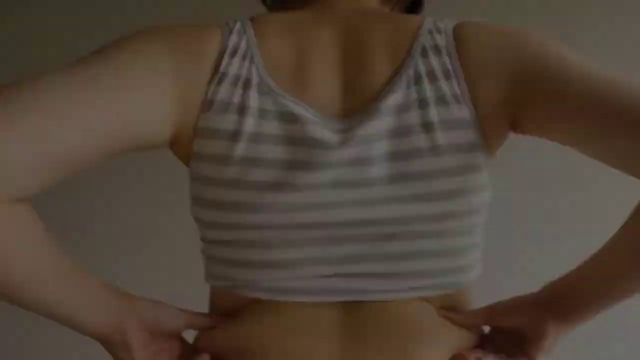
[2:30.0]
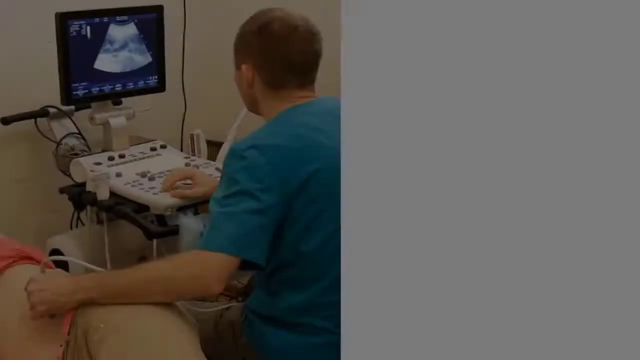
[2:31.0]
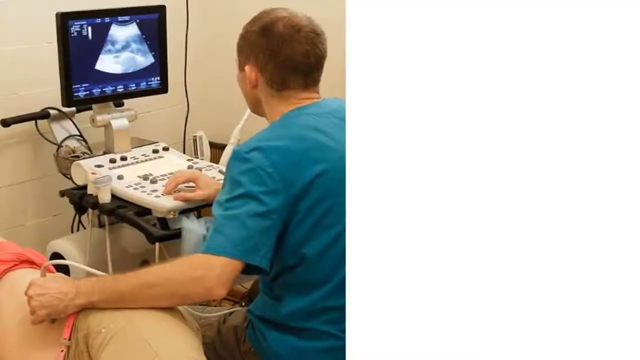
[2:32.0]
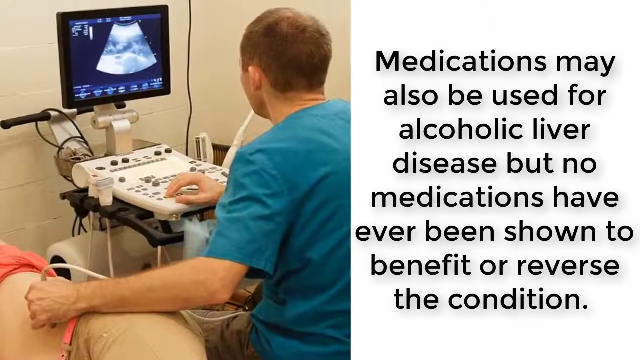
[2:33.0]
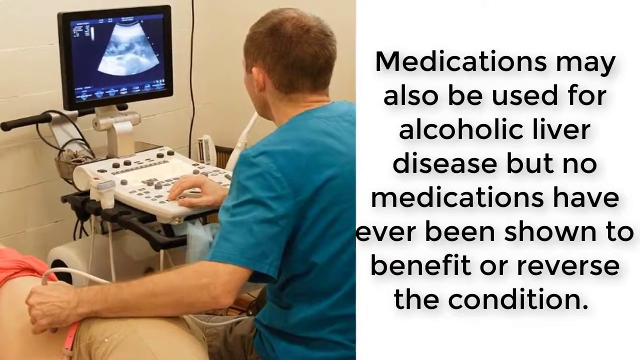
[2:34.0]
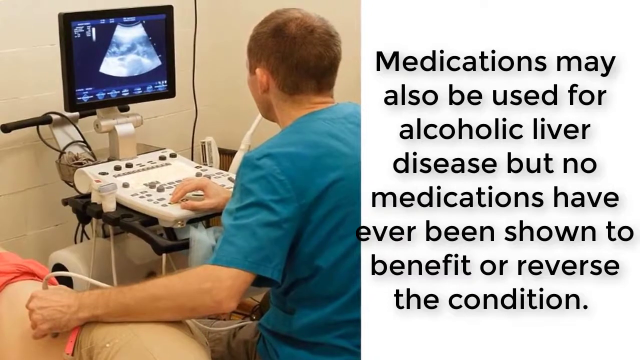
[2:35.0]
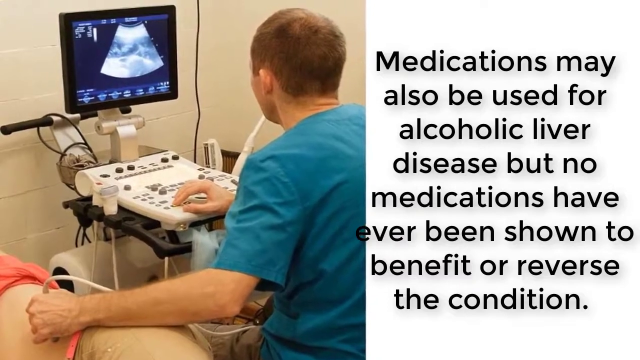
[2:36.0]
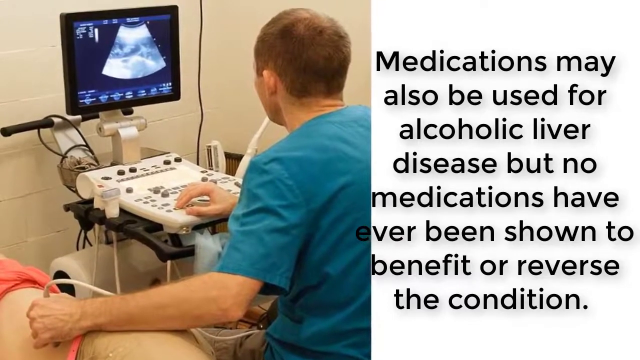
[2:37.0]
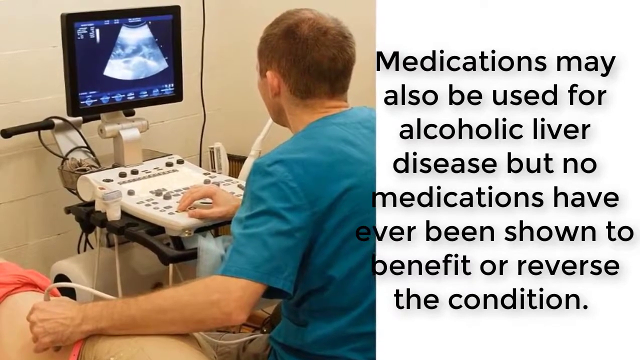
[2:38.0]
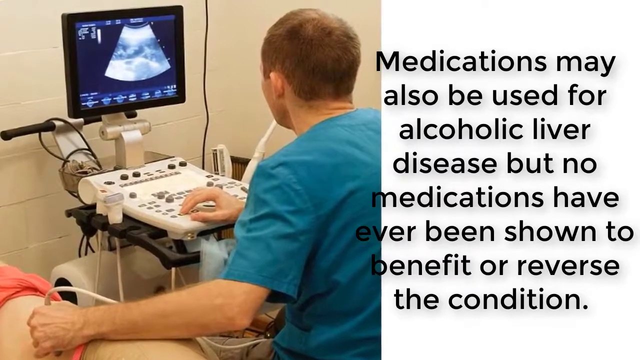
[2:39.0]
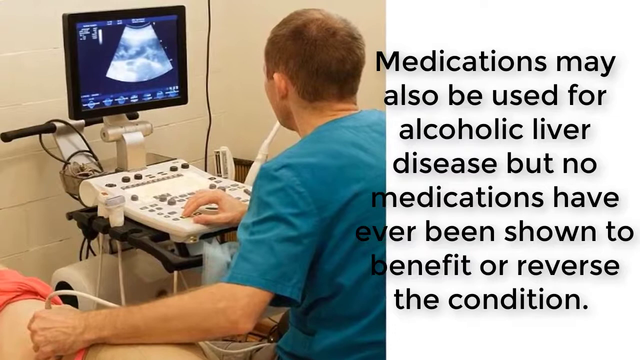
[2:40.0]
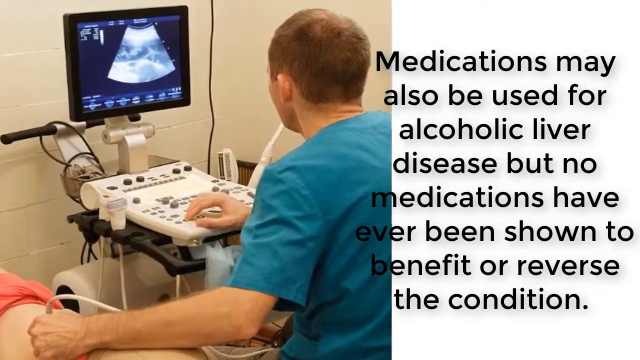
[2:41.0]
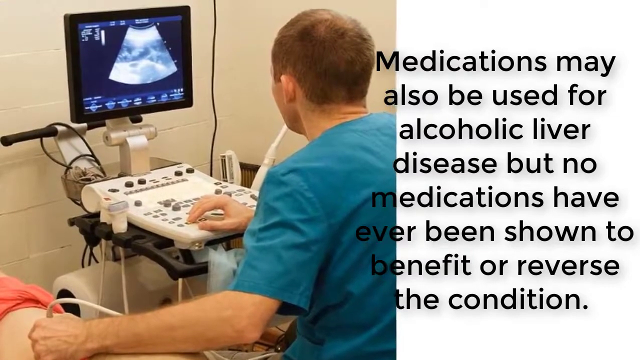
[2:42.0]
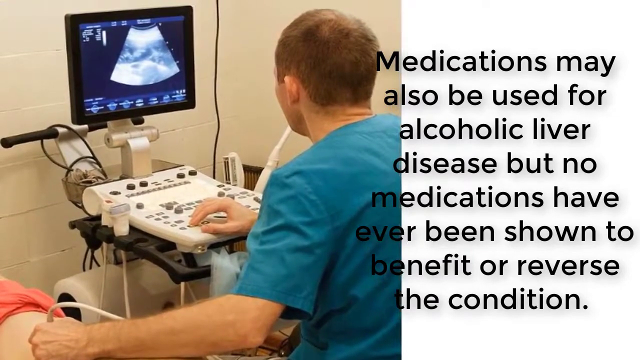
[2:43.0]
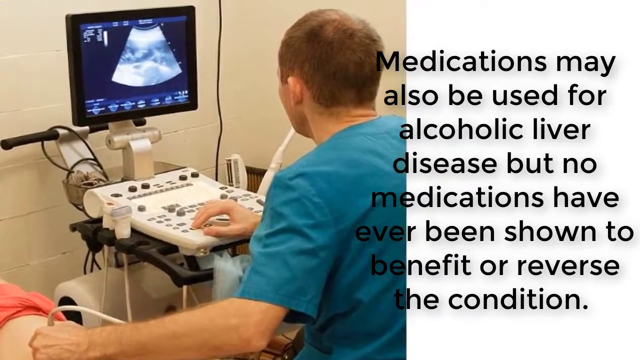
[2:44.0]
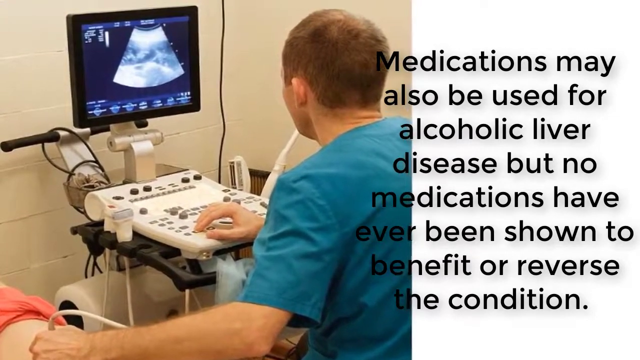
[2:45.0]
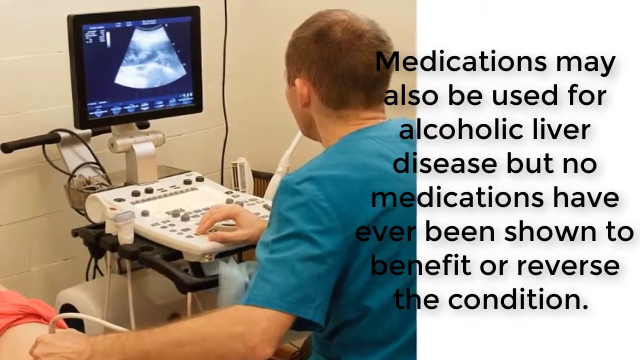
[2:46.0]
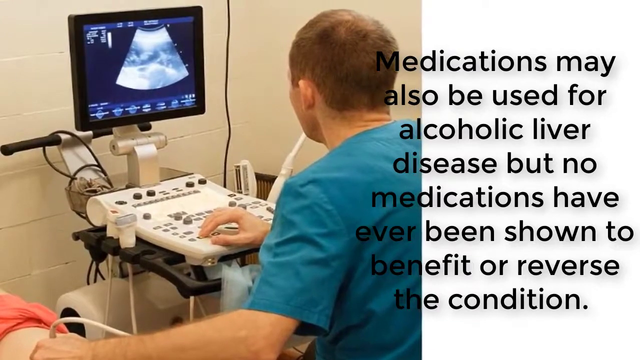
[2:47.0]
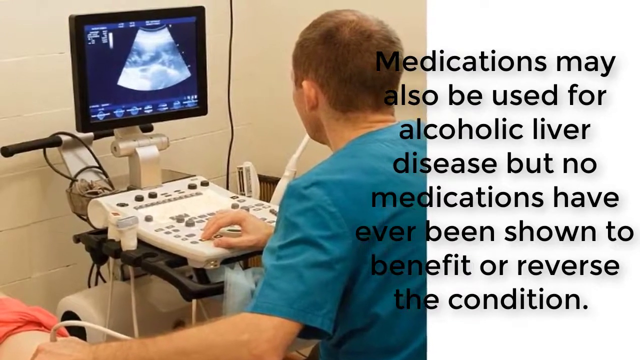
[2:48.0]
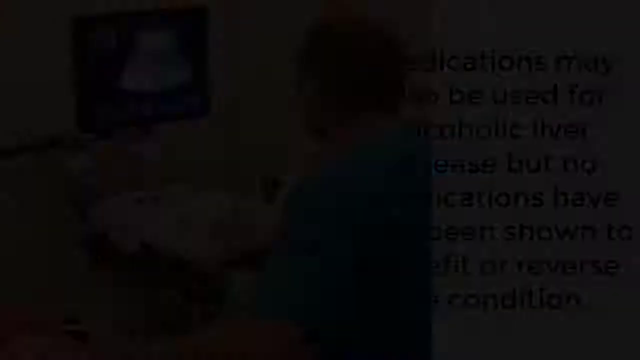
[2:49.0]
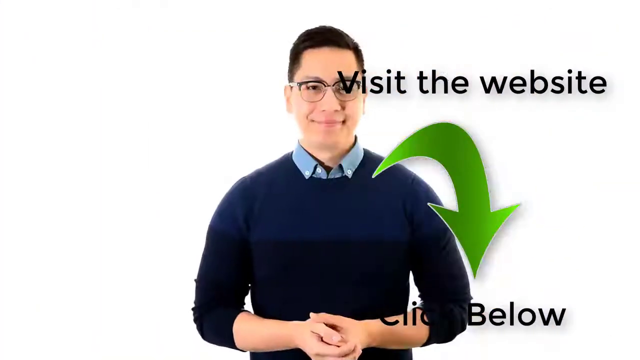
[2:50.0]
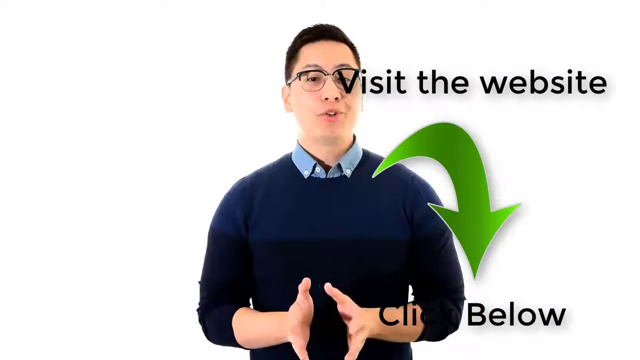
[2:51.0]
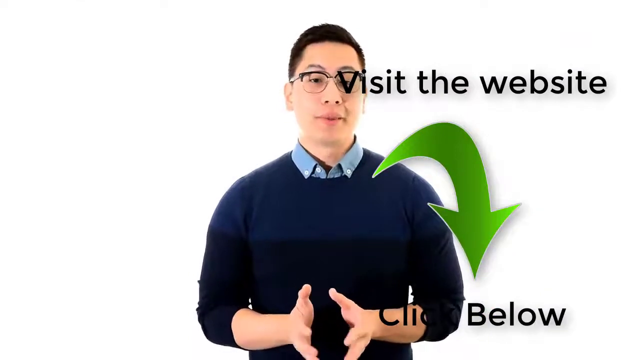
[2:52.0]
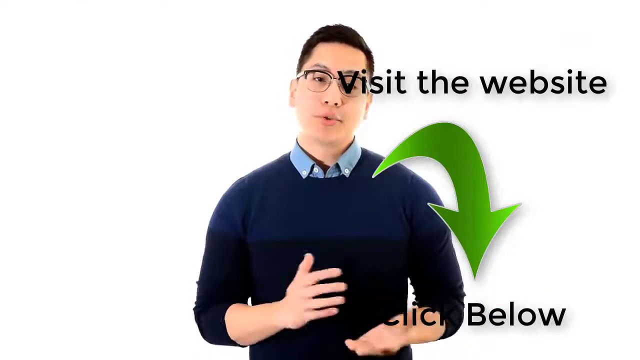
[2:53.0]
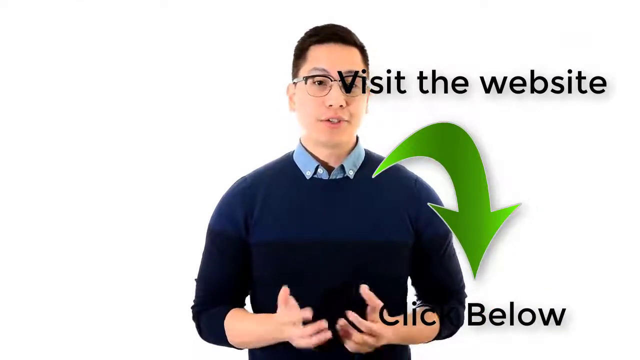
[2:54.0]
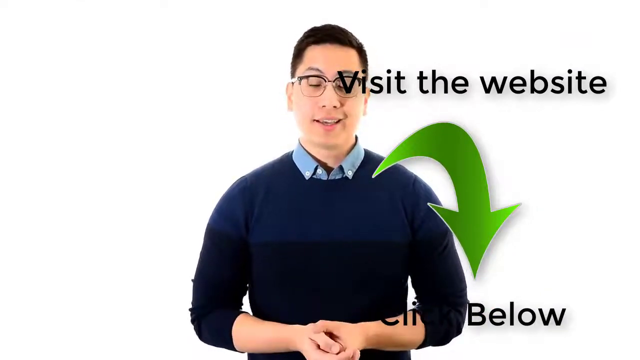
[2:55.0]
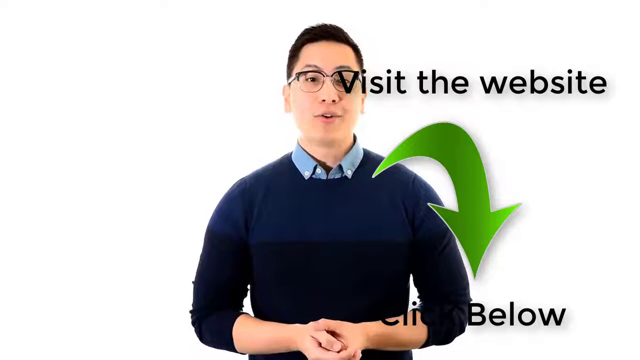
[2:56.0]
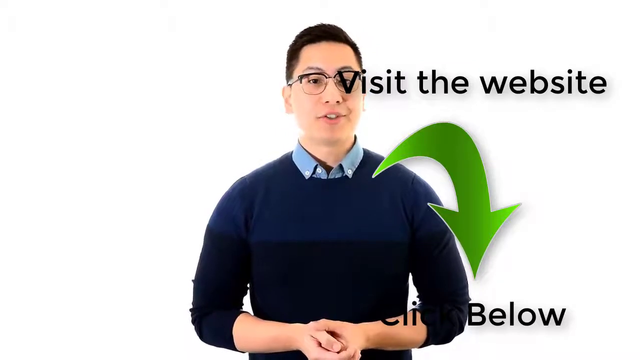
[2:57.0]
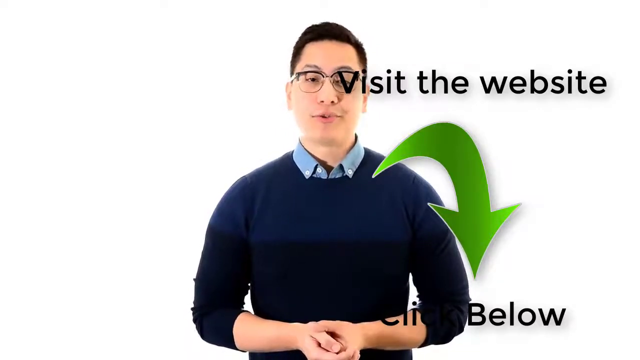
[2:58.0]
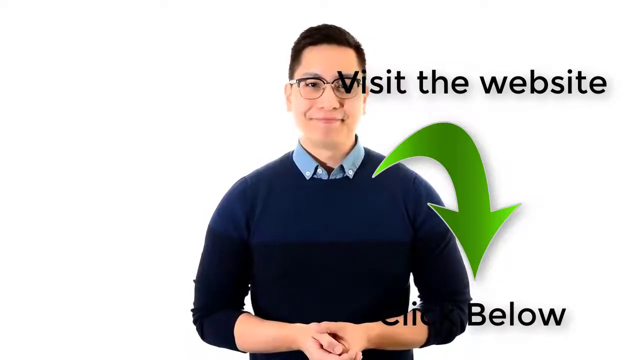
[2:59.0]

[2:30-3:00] On the left side of the screen, a person performs an ultrasound on a patient, typing with their right hand and holding the ultrasound device on the patient with their left hand. Little of the patient is visible other than their lifted shirt. The worker looks at a computer screen showing what is being scanned. On the right side, text reads "Medications may also be used for alcoholic liver disease, but no medications have ever been shown to benefit or reverse the condition." The view zooms in closer on what the technician is doing and looking at on the screen. Next, a man appears, wearing a navy sweater over a blue button-down shirt with the collar sticking out, and glasses. Black text to his right reads "Visit the website", and a green arrow, also to his right, reads "Click Below". He is smiling and appears to be talking, as if explaining something.